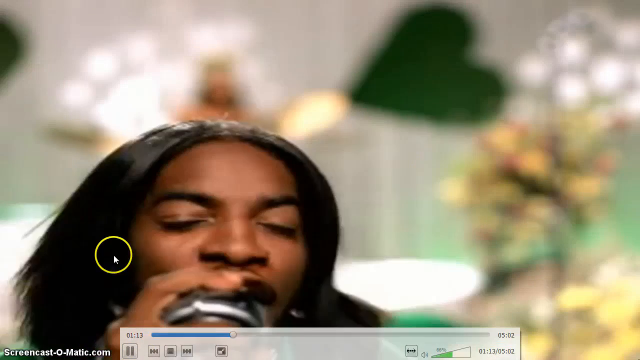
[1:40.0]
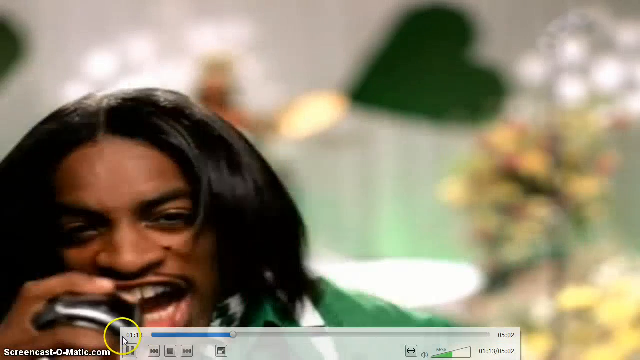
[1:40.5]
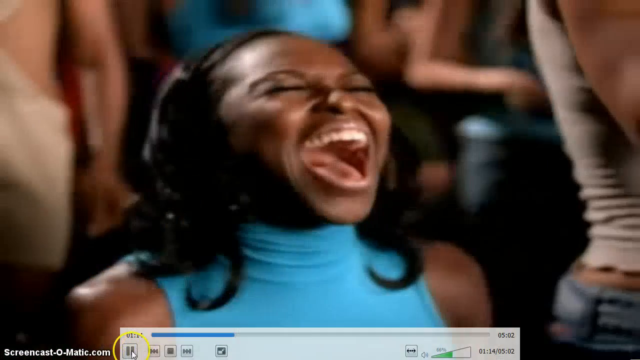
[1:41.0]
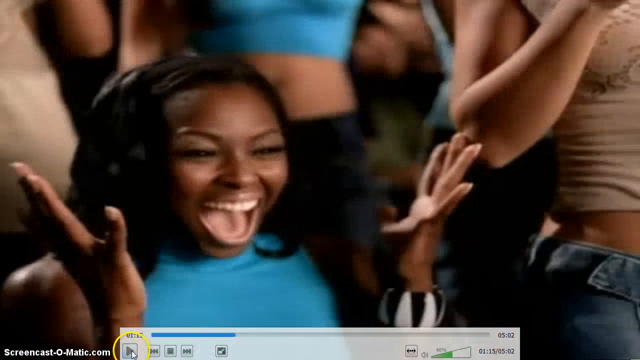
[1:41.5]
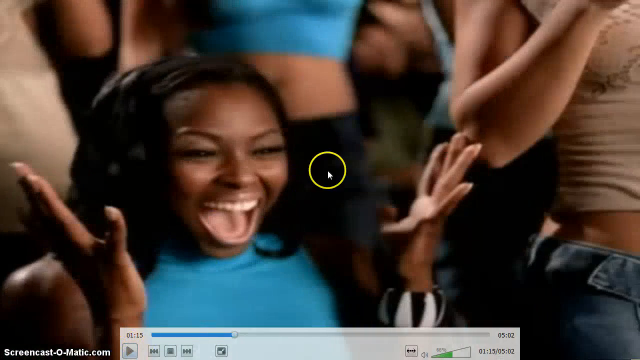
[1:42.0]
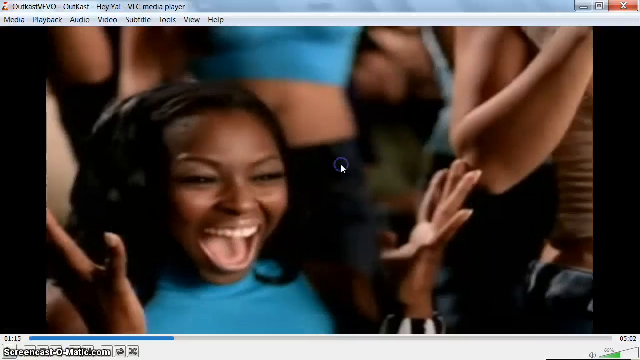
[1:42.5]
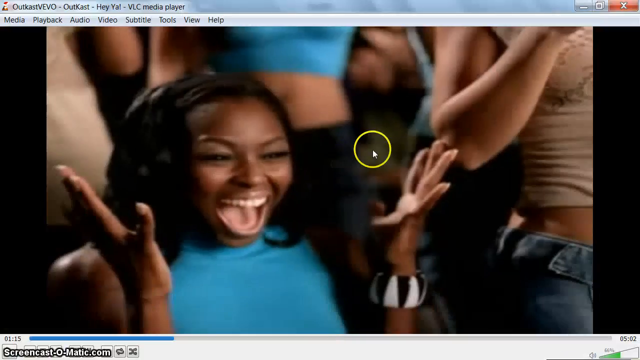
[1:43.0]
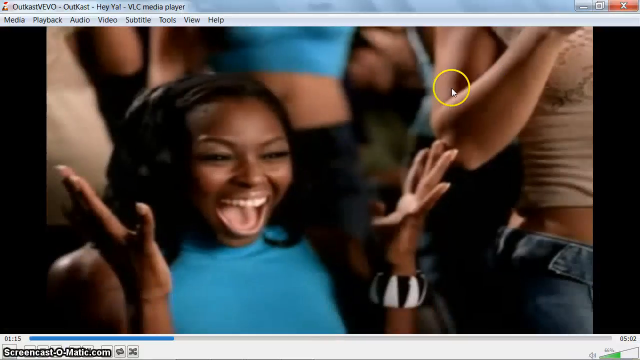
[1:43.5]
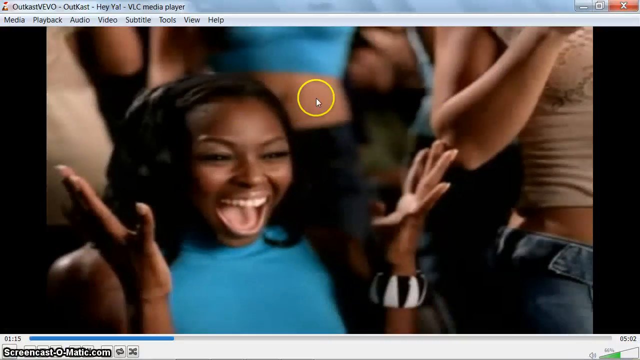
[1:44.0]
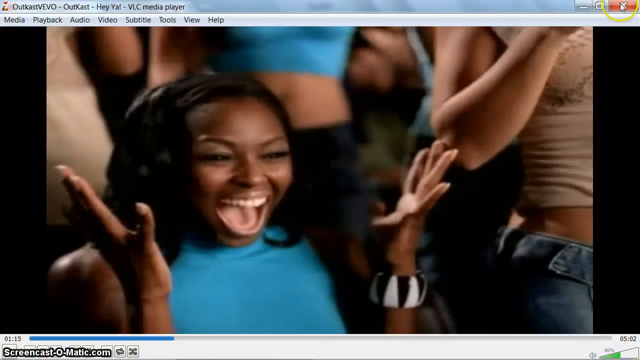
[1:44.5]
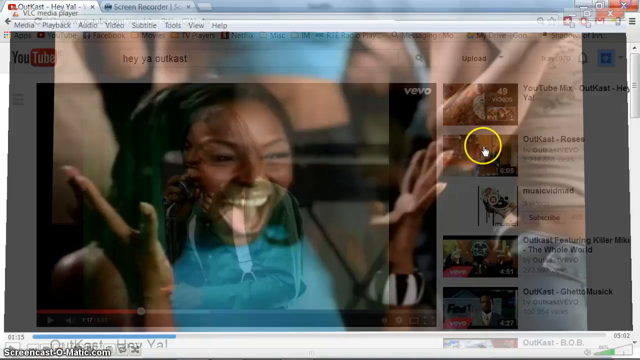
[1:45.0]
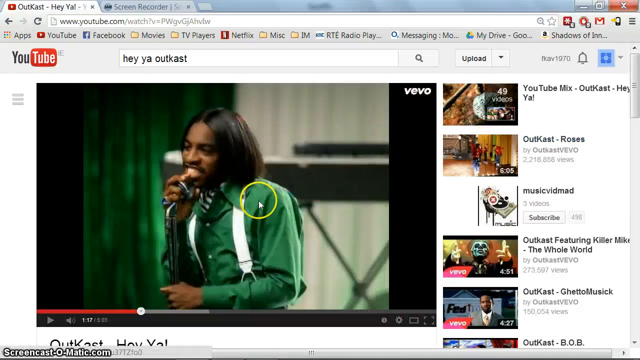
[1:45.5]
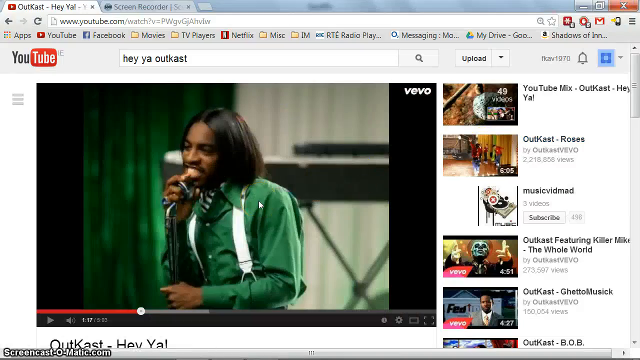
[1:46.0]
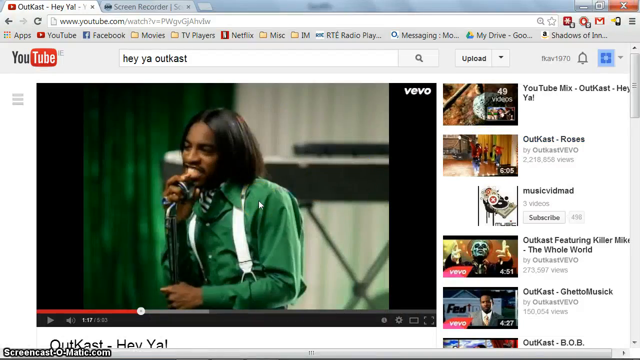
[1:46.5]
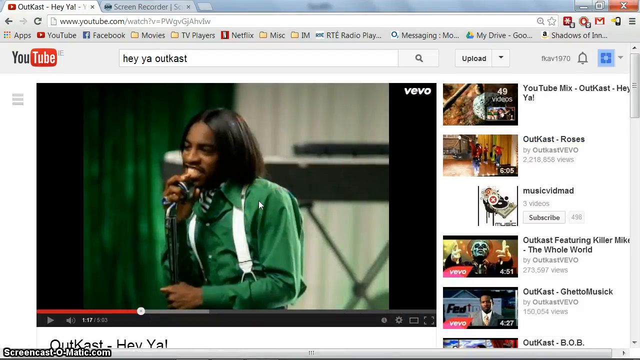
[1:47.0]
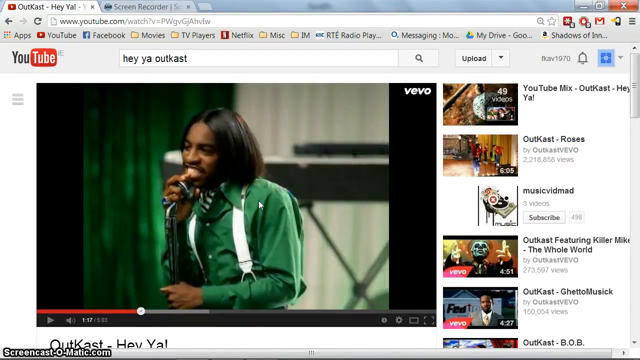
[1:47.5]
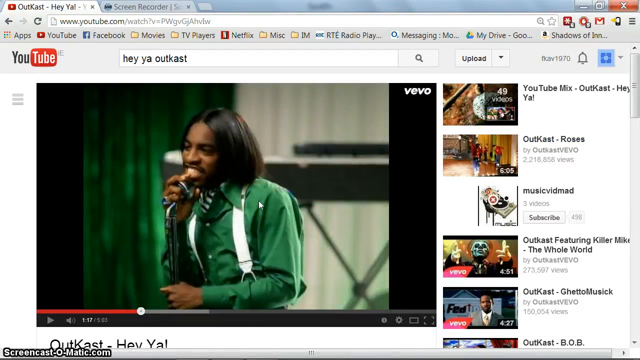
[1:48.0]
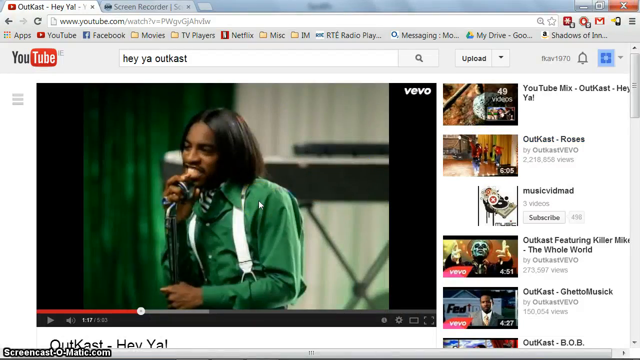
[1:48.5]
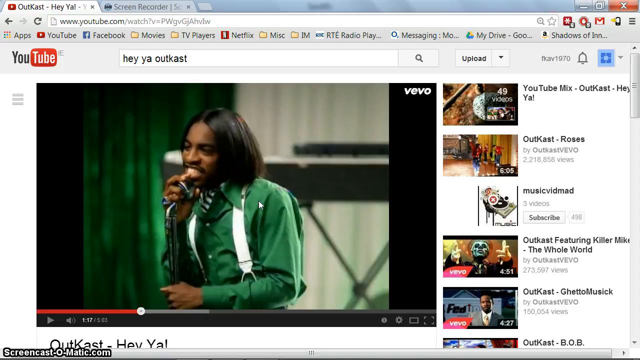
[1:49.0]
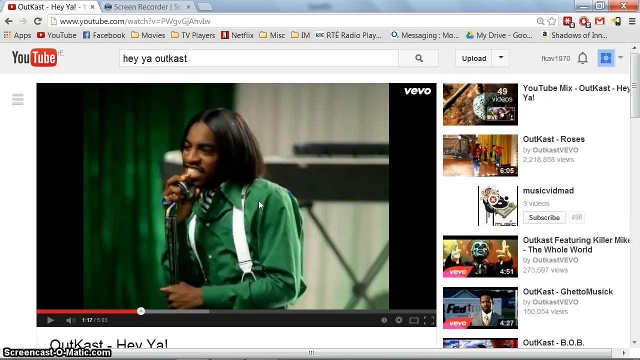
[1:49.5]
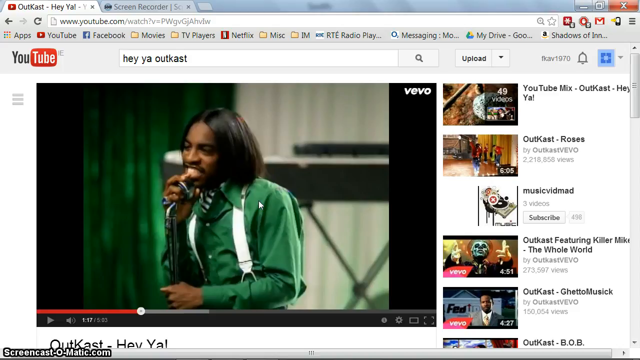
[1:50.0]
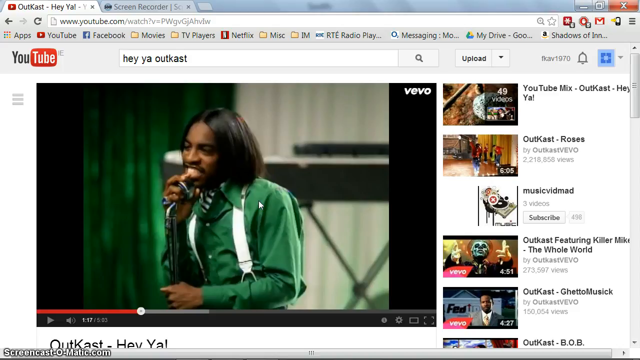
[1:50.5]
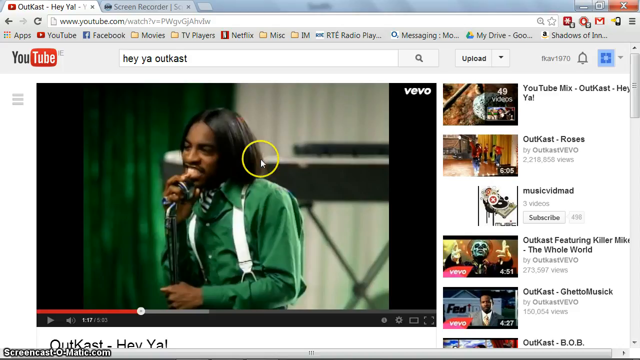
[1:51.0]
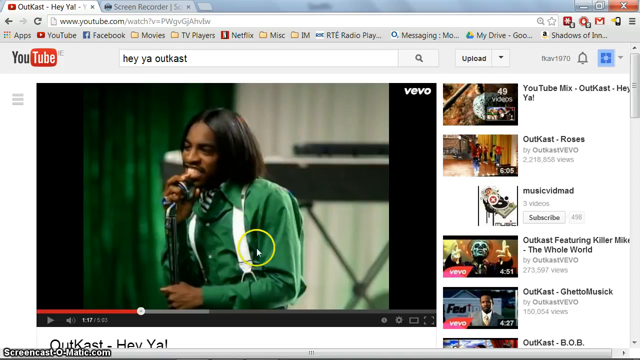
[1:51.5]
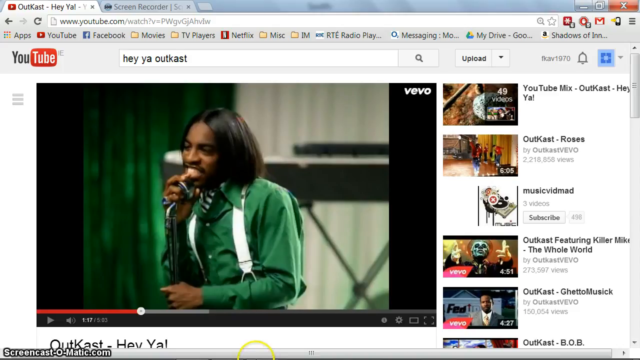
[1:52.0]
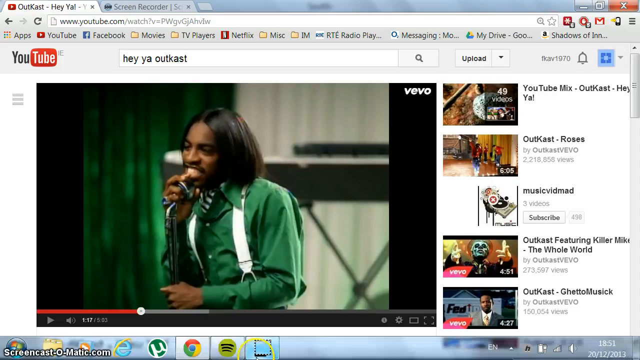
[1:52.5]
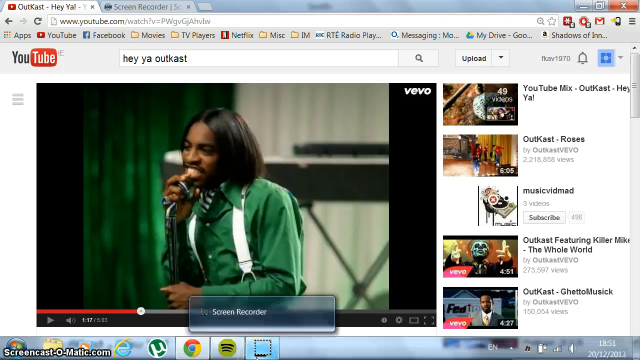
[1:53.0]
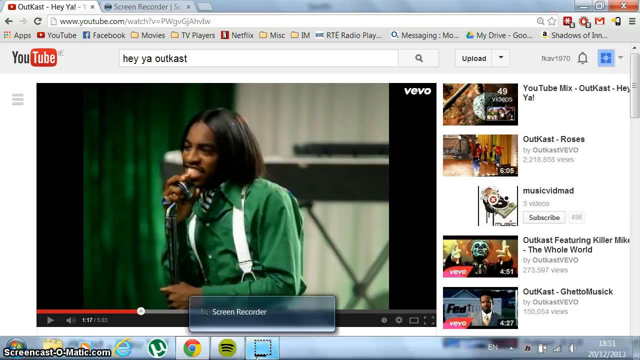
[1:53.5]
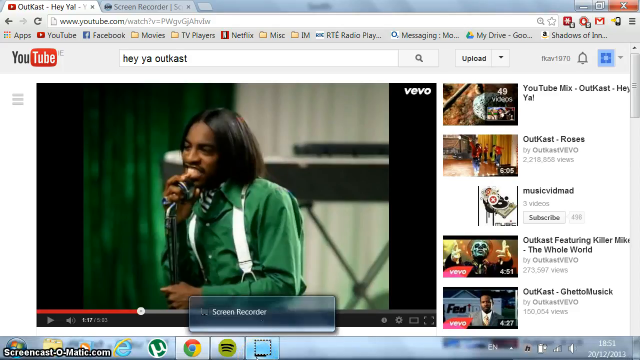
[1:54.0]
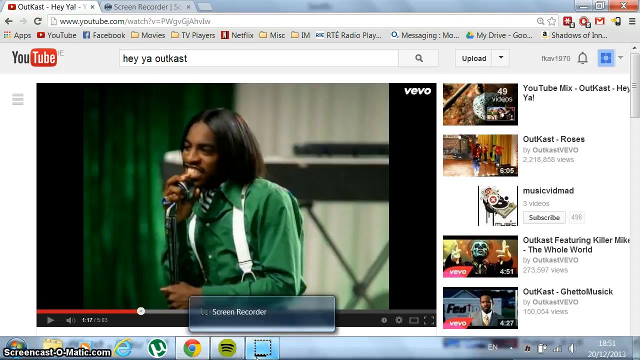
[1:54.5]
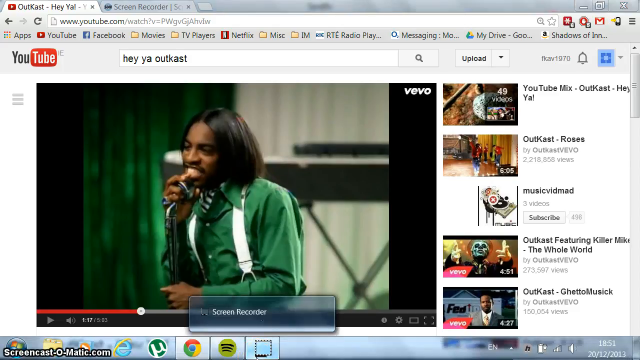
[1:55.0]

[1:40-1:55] The OutKast music video plays in the media player. The main singer wears a green long-sleeve button-up shirt, white suspenders, and a striped green and white bow tie. His hair is straight, parted down the middle, and touches just the top of his shoulders. He is standing in front of a microphone stand, singing, with green and white ceiling-to-floor curtains and his band behind him. Girls in the audience are screaming and getting very excited. The cursor then closes the media player and goes to another application, a screen recorder, opening it.